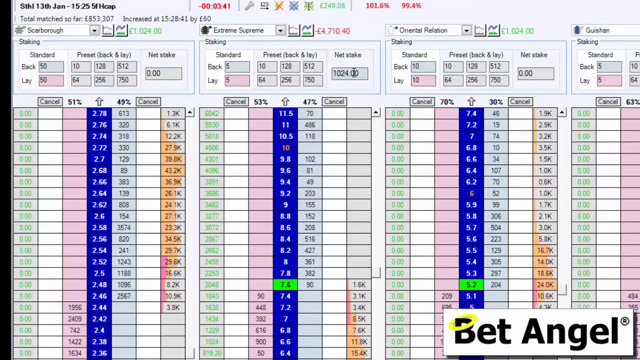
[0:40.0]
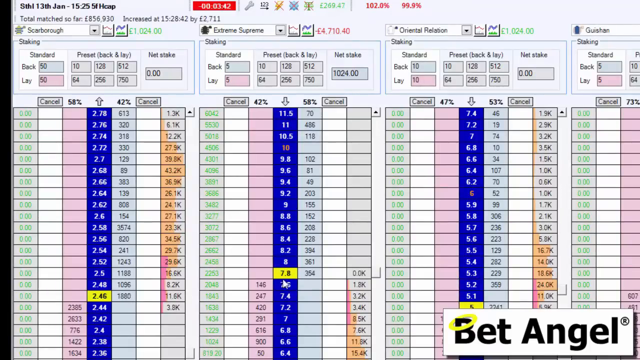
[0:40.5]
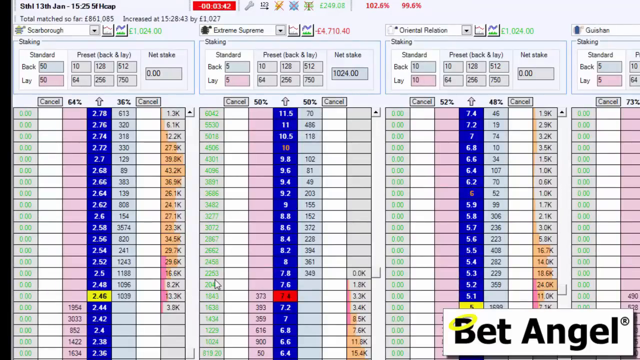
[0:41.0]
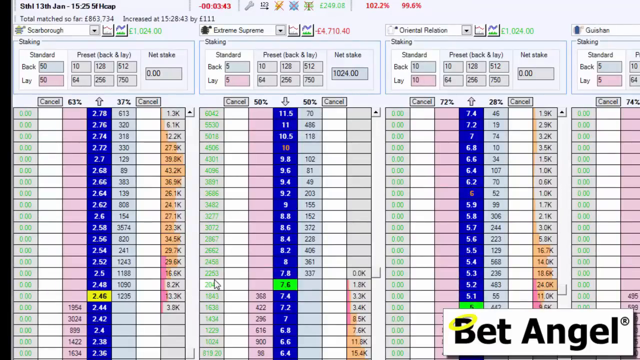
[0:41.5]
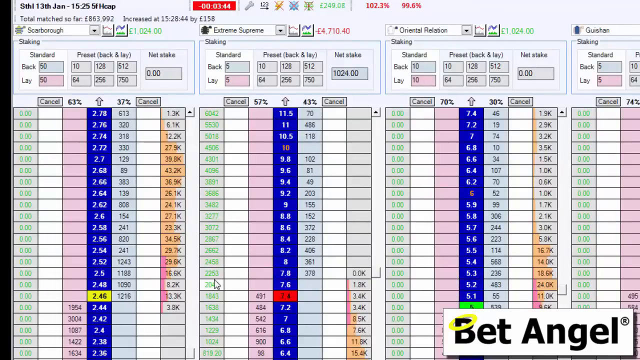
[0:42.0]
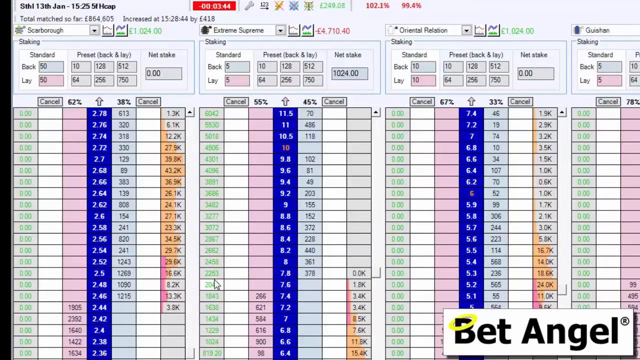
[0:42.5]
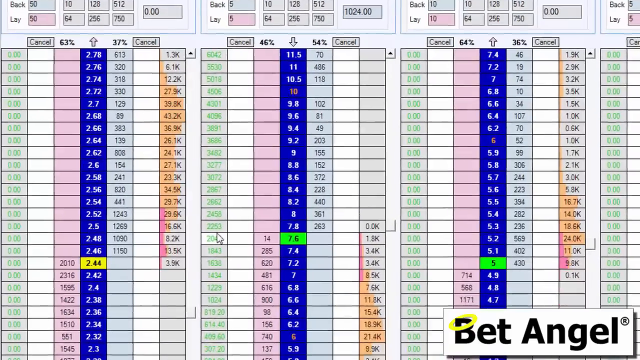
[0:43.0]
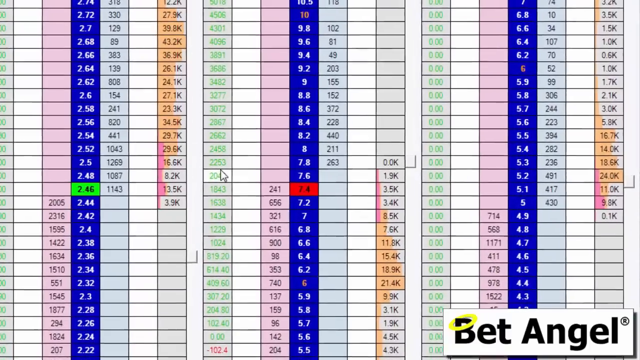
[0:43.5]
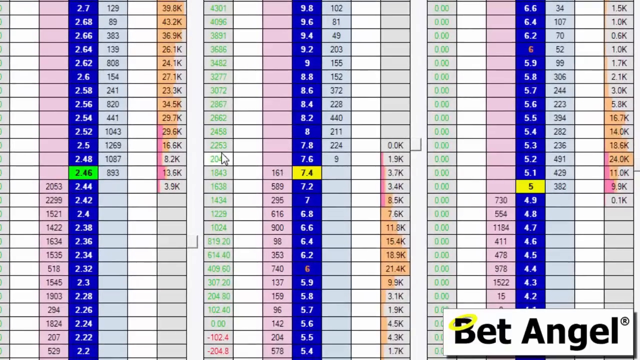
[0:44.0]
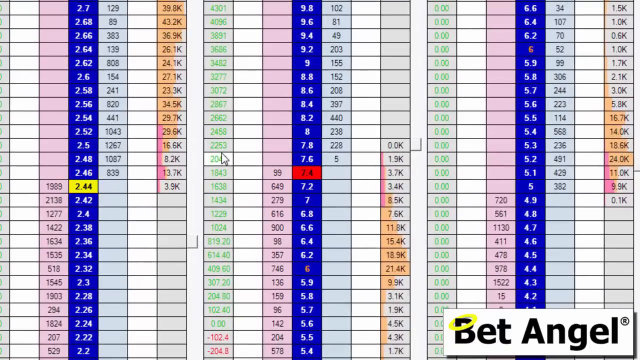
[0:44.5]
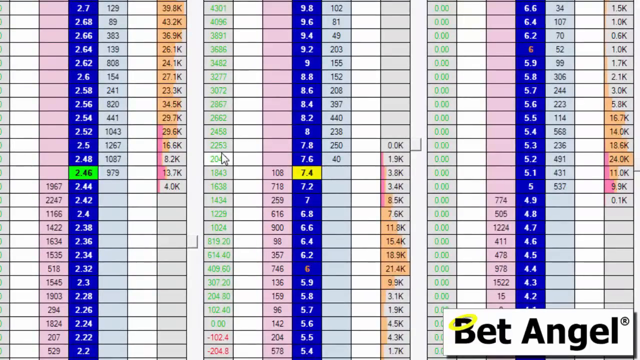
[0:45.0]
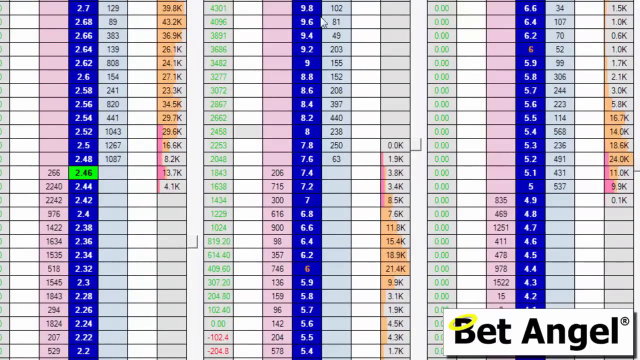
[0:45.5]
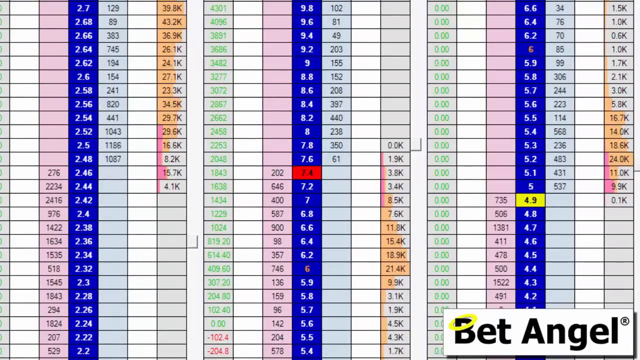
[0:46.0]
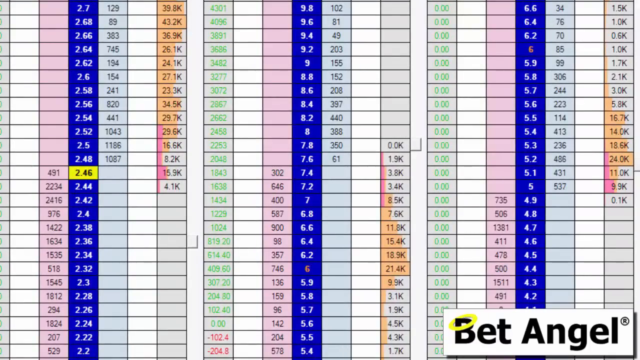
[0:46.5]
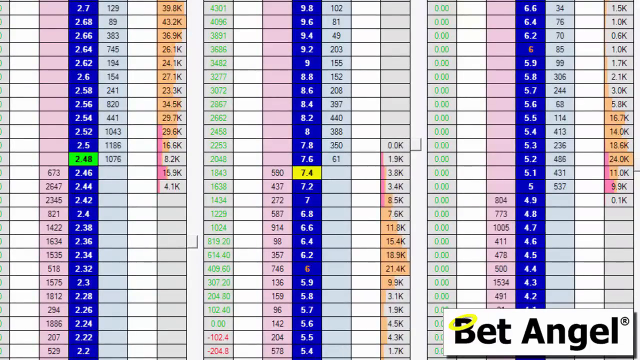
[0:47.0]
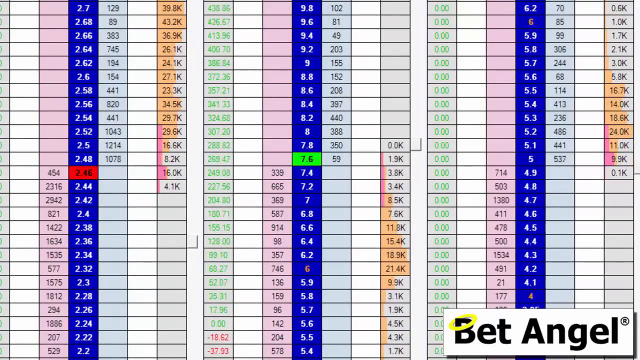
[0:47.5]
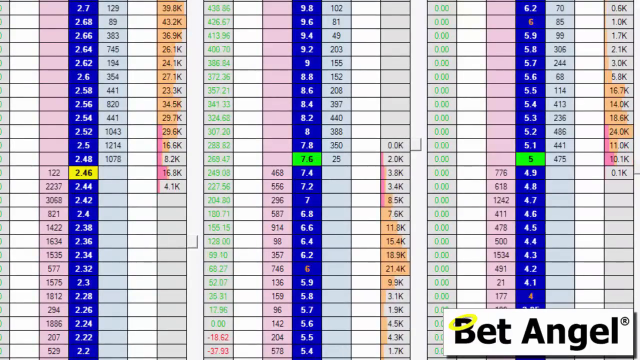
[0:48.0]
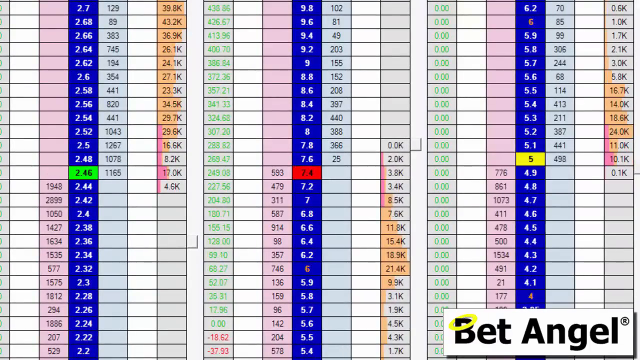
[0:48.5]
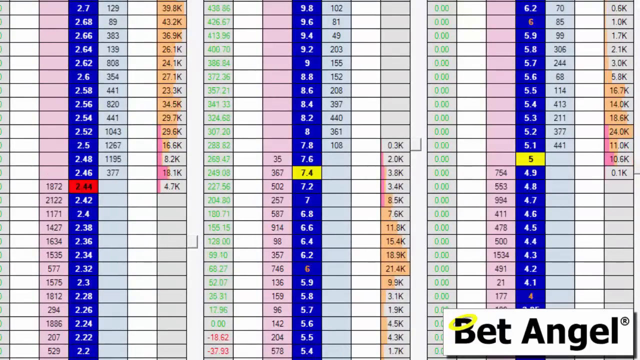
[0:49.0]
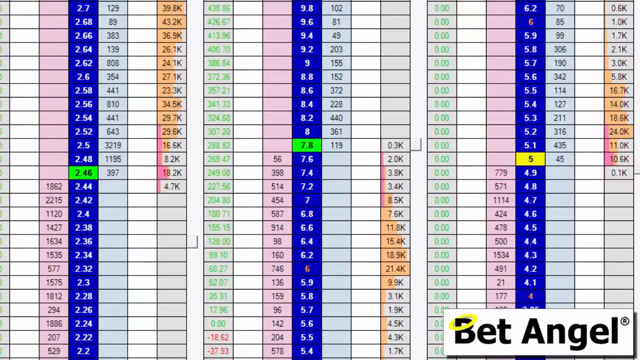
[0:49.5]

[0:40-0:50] The graph is from Bet Angel, as stated in the lower right-hand corner, with a yellow halo over the B. Sections of the graph have two ever-changing numbers at the top. It lists standard numbers and says "back lay", with a preset back and lay net stake. There are numbers in green and numbers in red; they do not look like U.S. dollars, and a European dollar sign is in front of them. A section says "staking" across each box, and the numbers in the graphs change constantly. A cursor points to the number 2253, and then the view zooms in on that section of the graph. Going up and down the blue section is a little box that changes from yellow to red to green depending on where it moves and on what the numbers change to in the pink section right next to it.